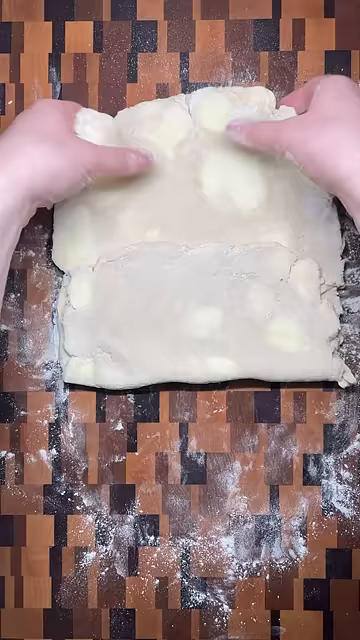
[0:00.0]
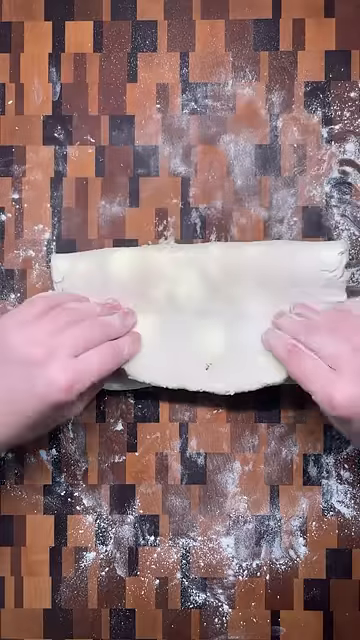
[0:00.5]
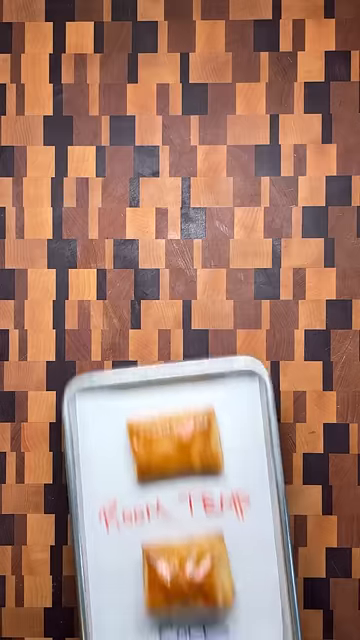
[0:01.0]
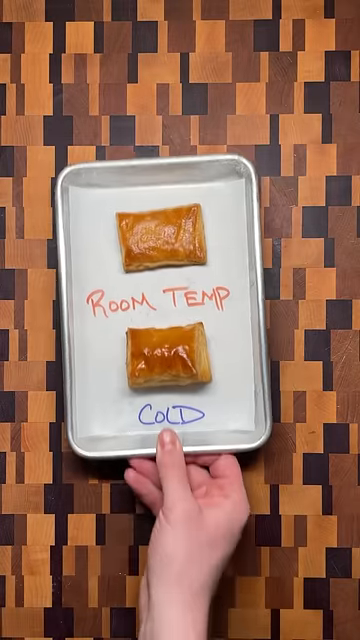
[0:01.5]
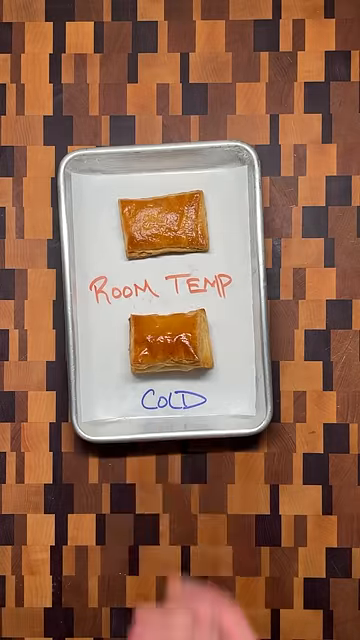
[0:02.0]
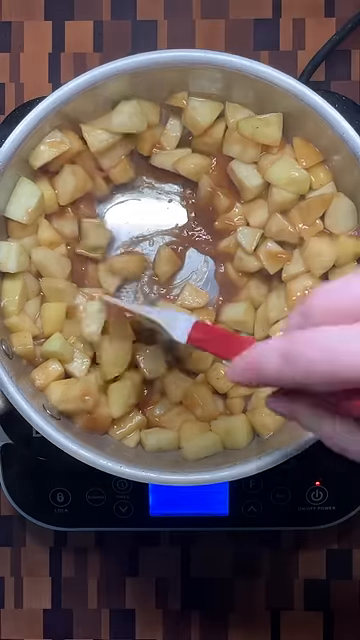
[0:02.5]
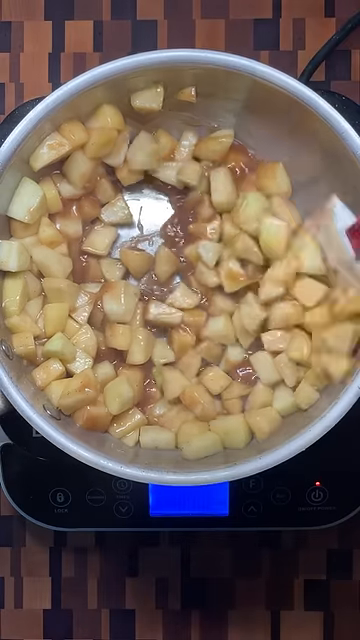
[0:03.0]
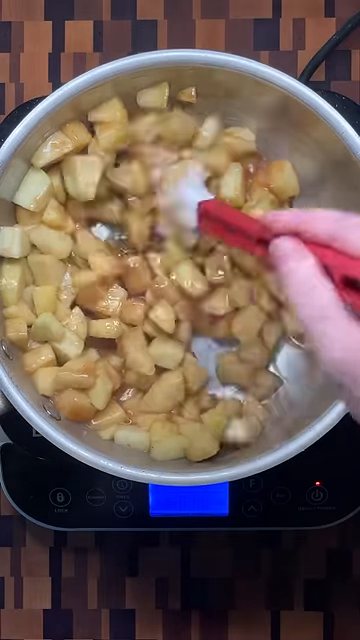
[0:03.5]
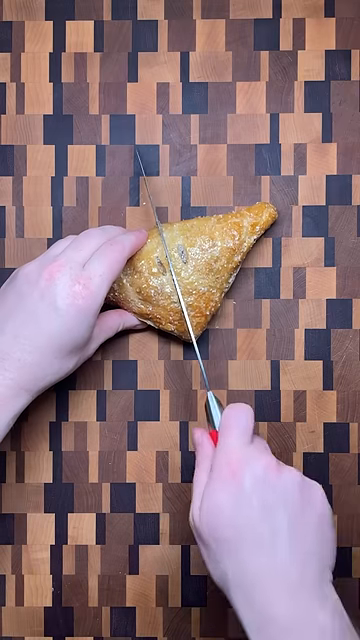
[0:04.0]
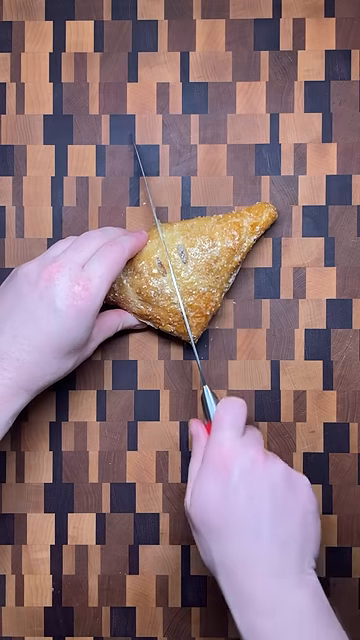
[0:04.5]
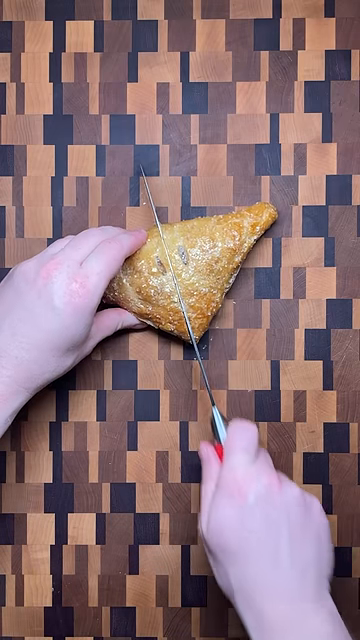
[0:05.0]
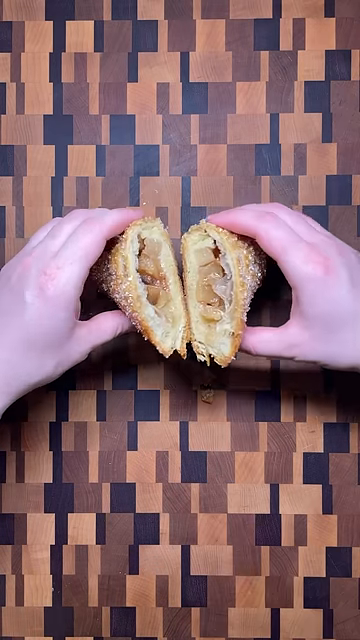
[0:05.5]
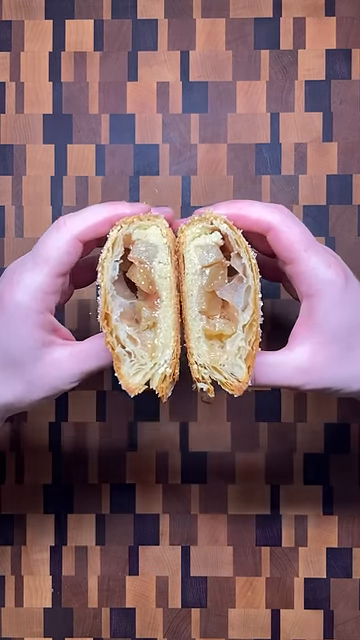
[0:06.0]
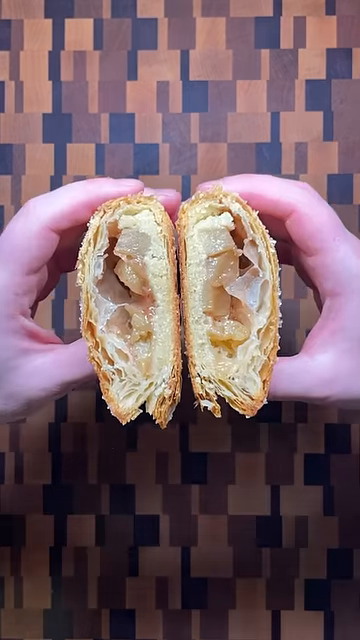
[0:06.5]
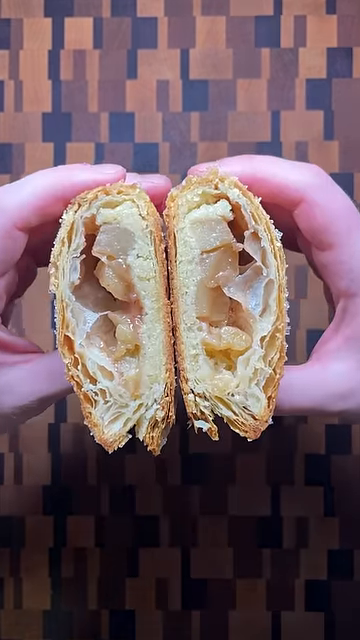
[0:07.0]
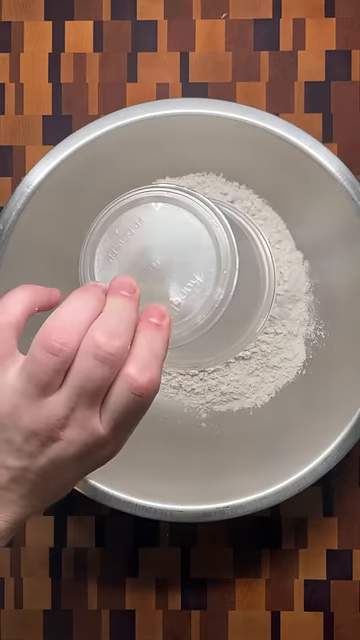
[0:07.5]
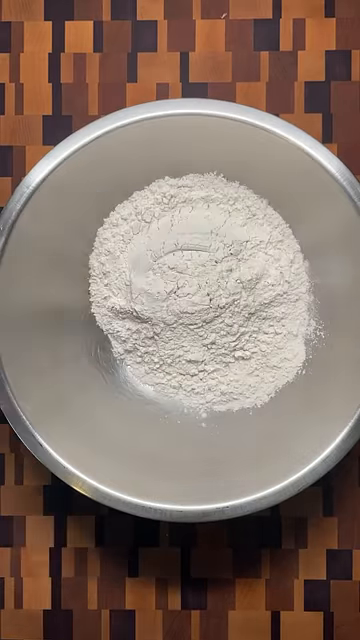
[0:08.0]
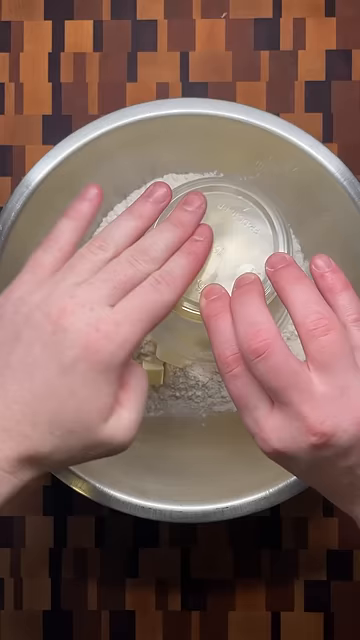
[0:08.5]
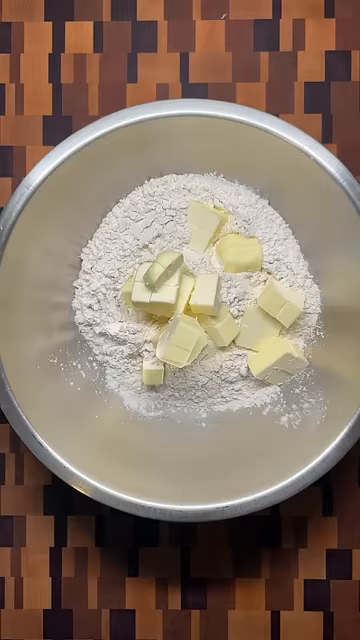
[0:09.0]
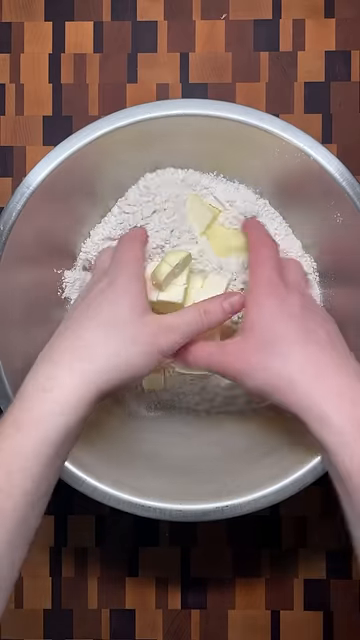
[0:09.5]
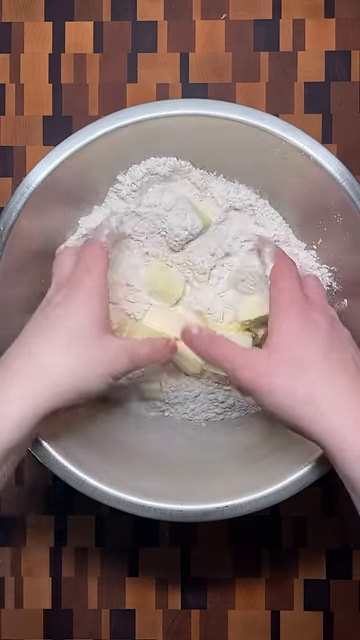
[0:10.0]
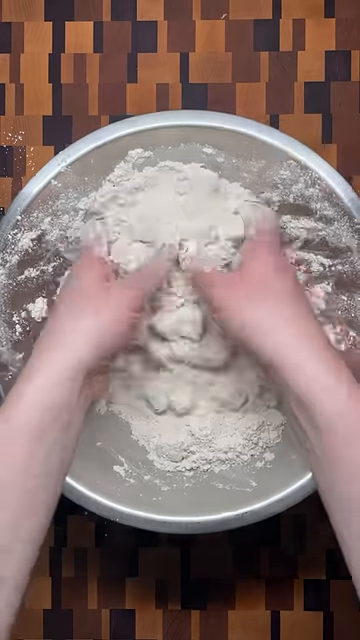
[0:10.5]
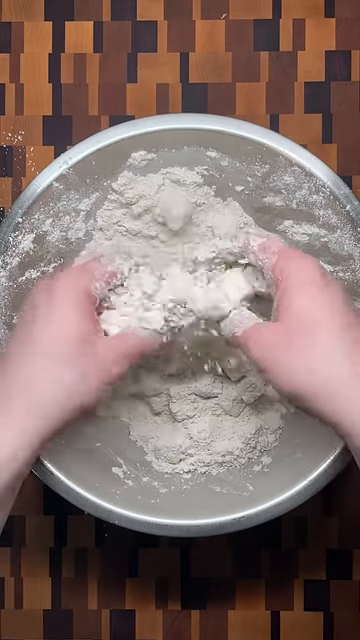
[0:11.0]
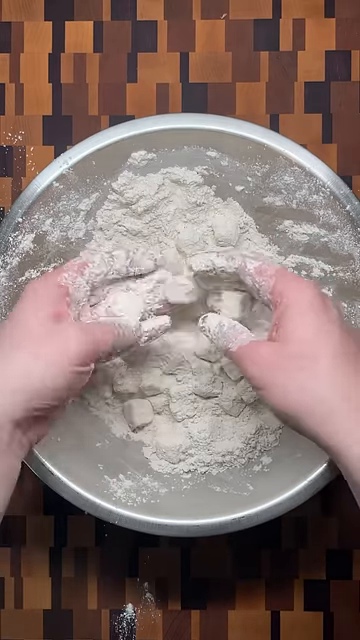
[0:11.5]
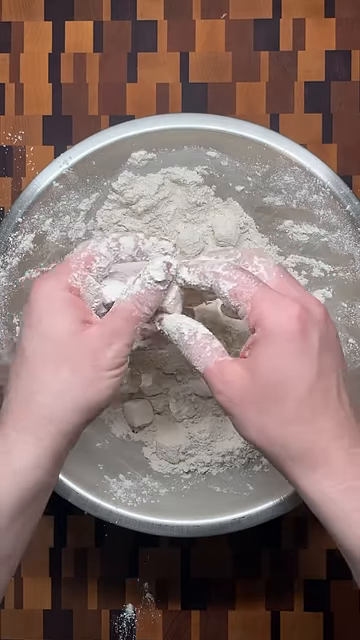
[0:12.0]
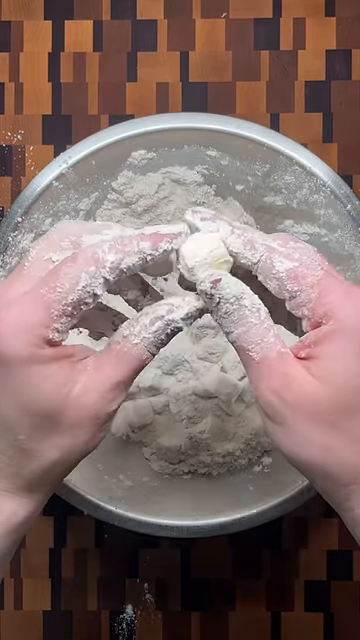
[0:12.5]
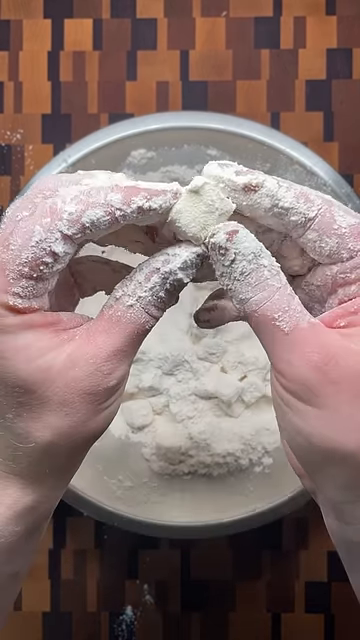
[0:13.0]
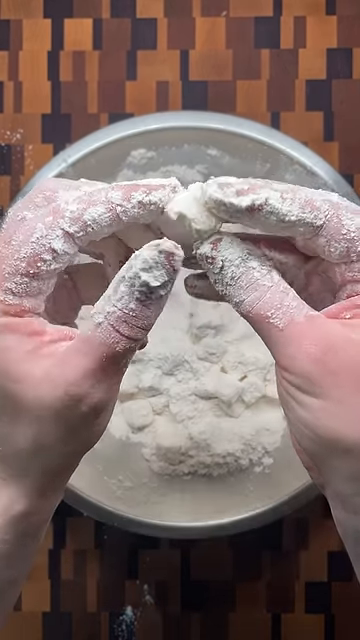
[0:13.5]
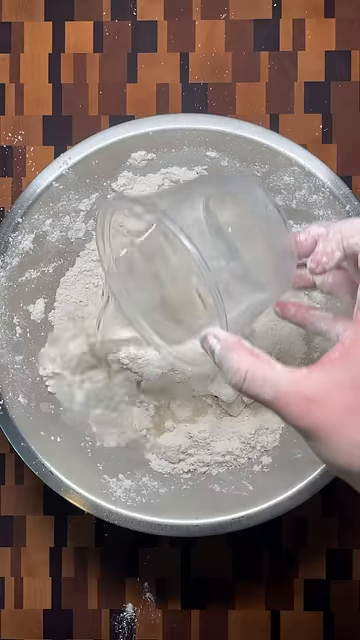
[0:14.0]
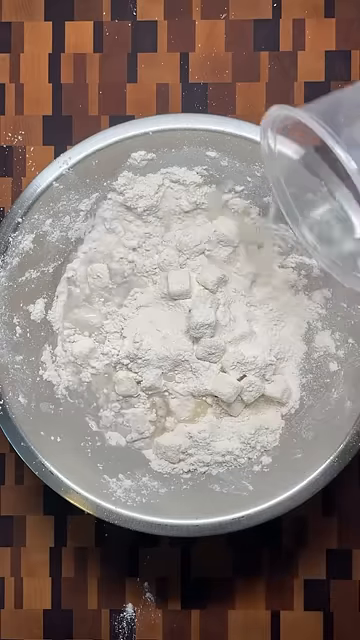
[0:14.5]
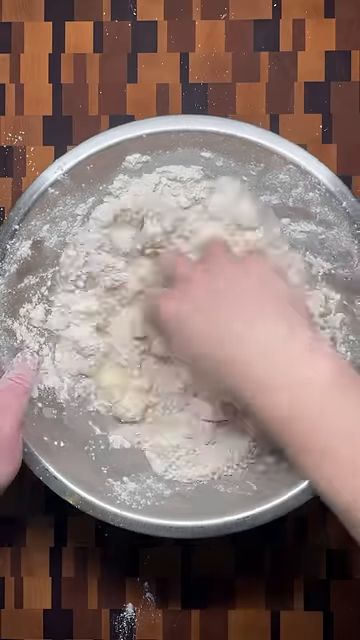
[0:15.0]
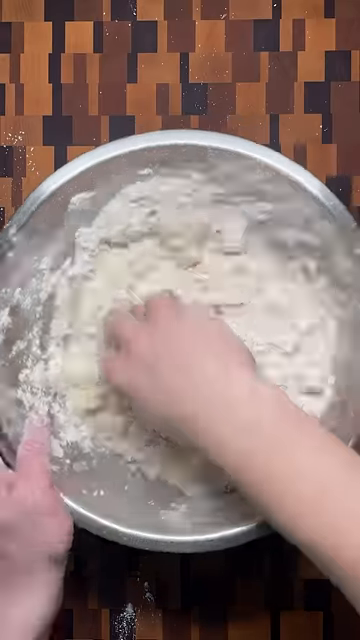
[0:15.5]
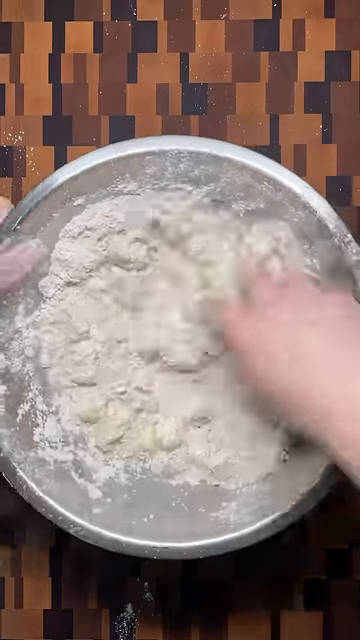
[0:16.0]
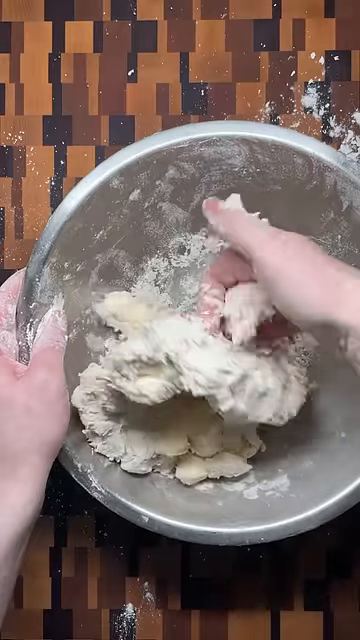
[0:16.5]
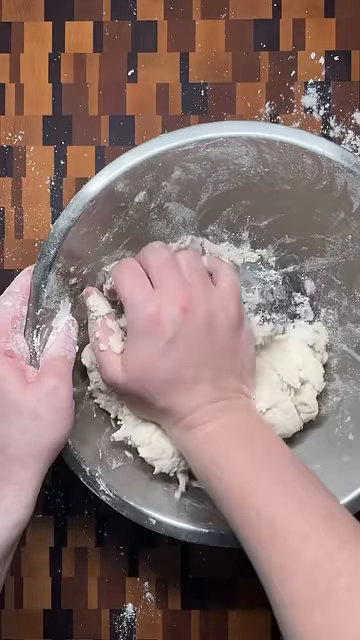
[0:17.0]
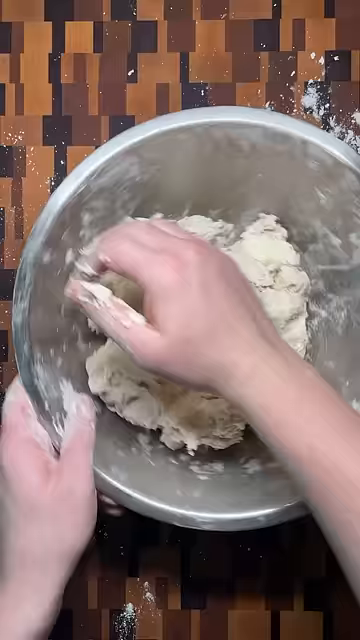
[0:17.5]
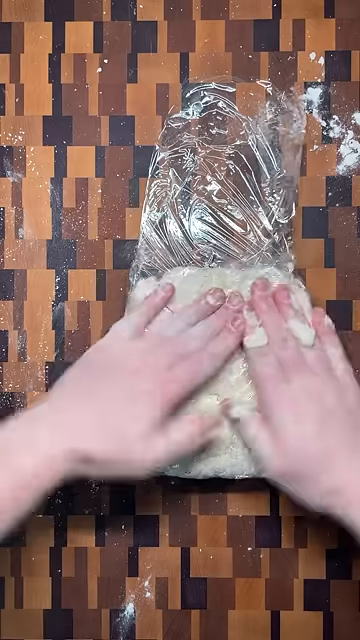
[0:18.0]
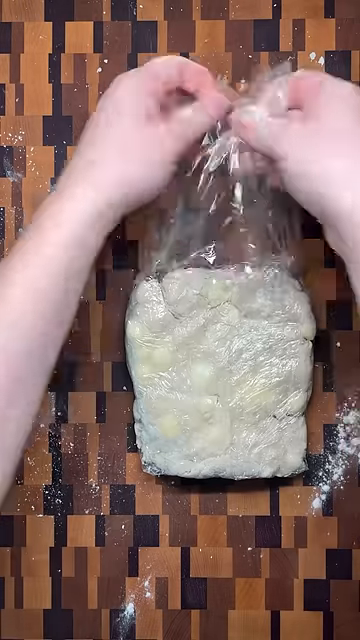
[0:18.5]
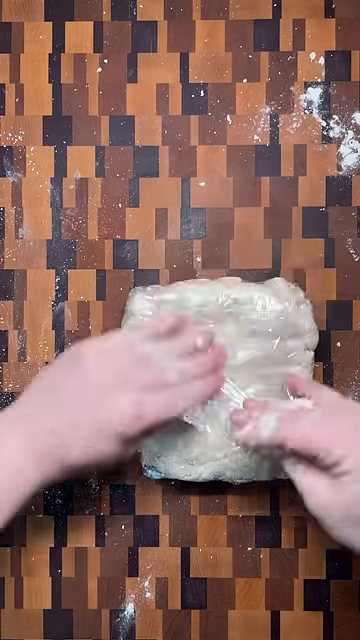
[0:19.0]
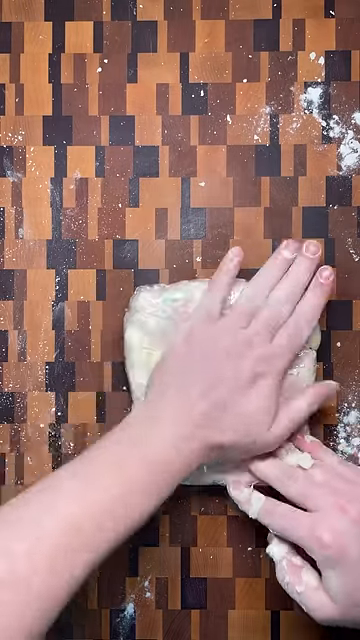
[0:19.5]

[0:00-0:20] Someone mixes butter with flour; the butter is square in shape. The person mixes in some milk, puts it together, and shapes it into a square. The person then cuts some foods, which are mixed with some butter or something similar, though this is not clear. The second part of the scene shows the final dish, while the first part shows the making process. After mixing the flour and butter with water, the person wraps it in plastic, maybe to use for making the dish later.